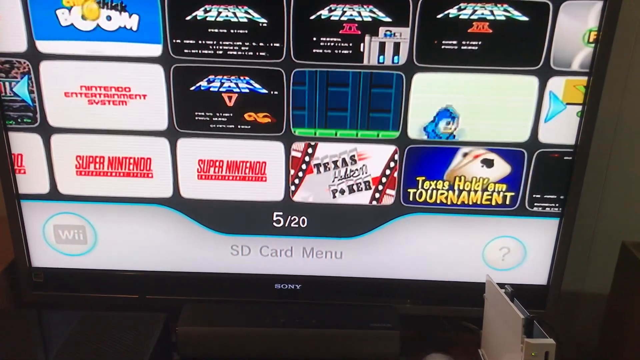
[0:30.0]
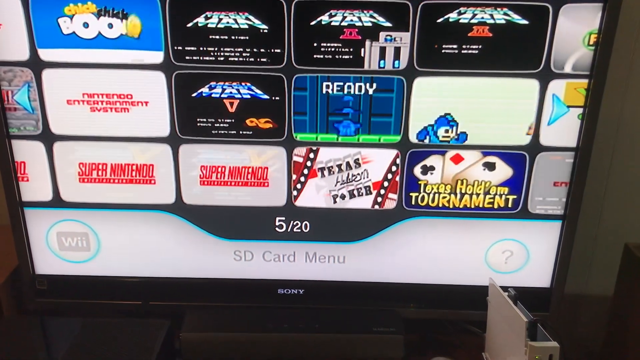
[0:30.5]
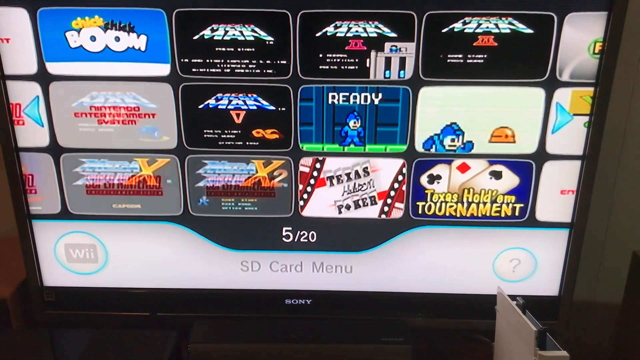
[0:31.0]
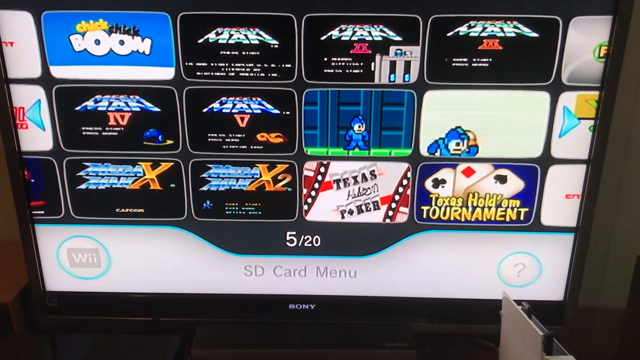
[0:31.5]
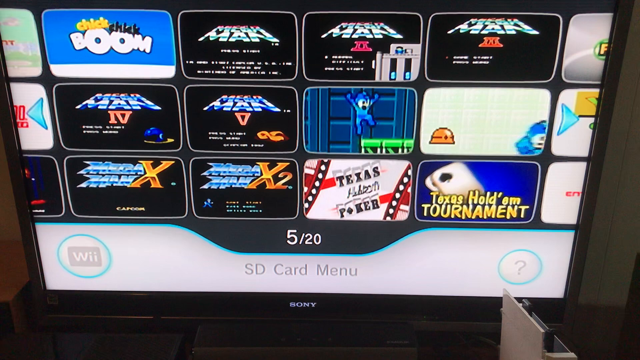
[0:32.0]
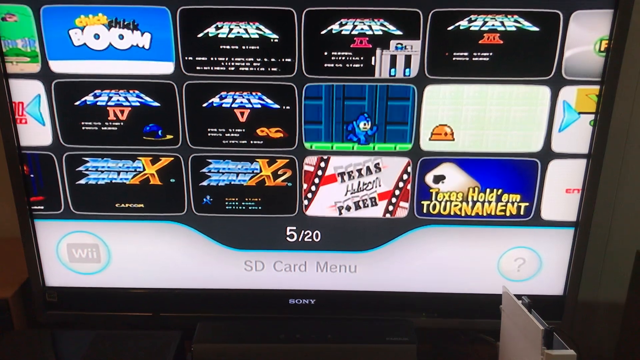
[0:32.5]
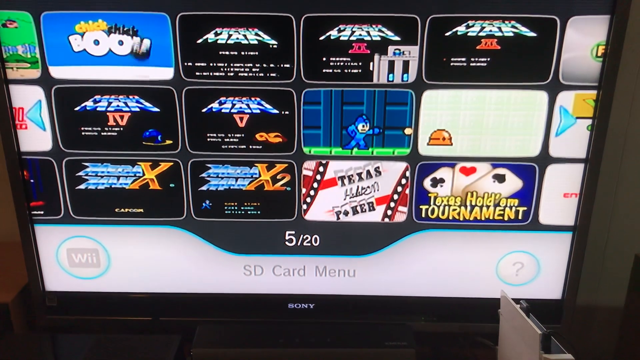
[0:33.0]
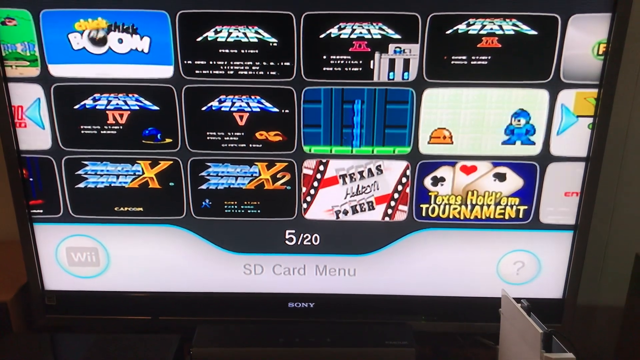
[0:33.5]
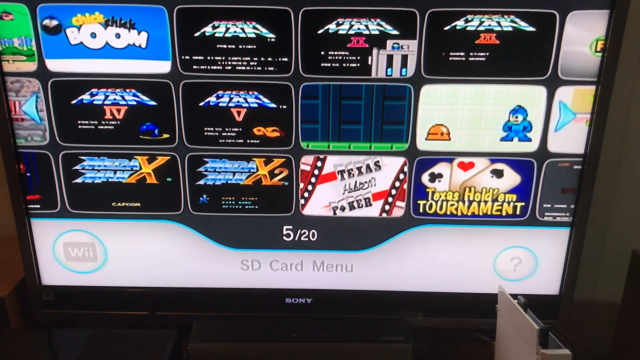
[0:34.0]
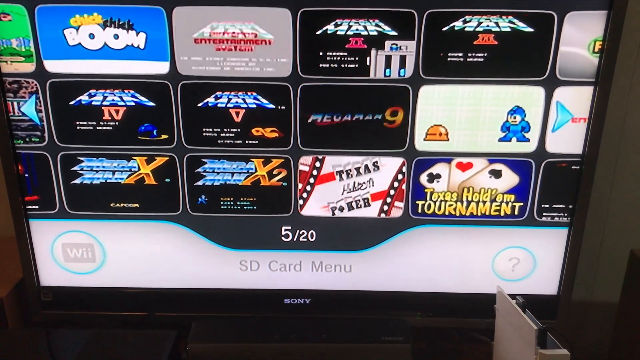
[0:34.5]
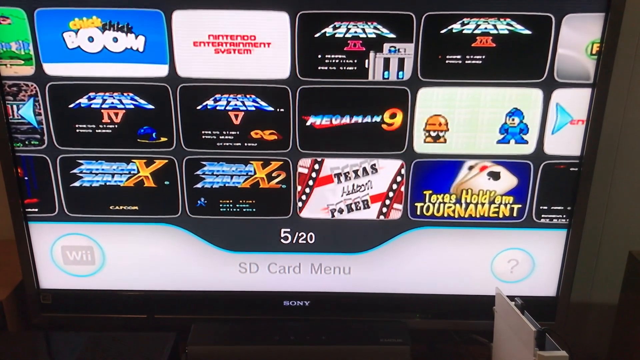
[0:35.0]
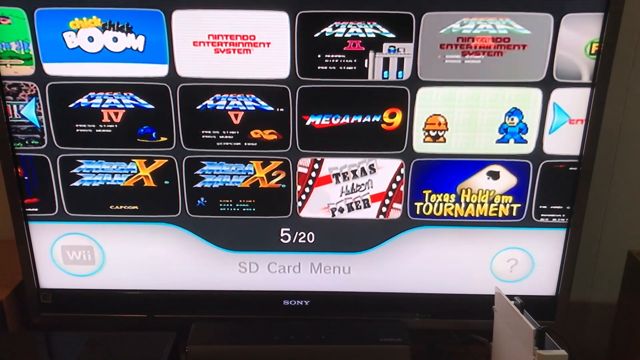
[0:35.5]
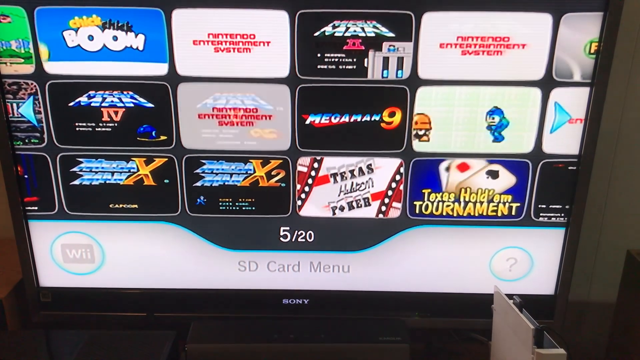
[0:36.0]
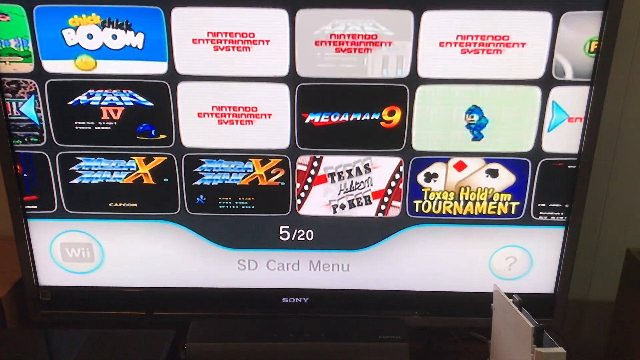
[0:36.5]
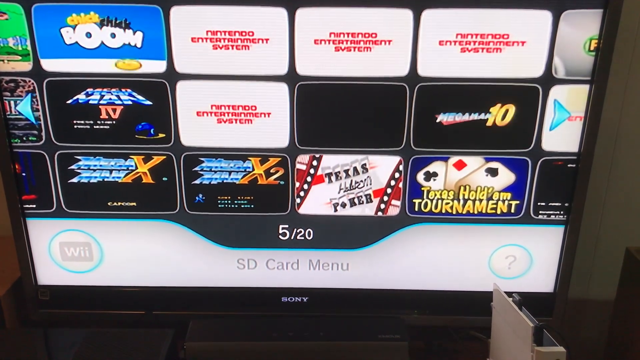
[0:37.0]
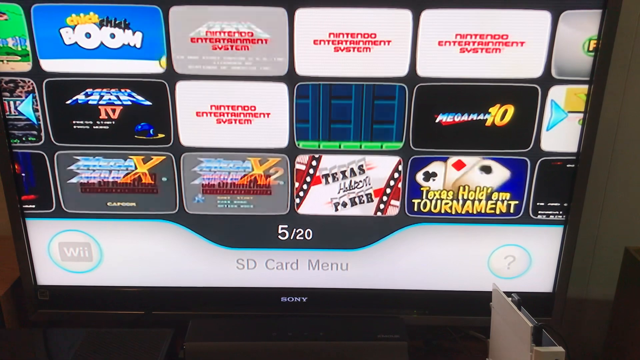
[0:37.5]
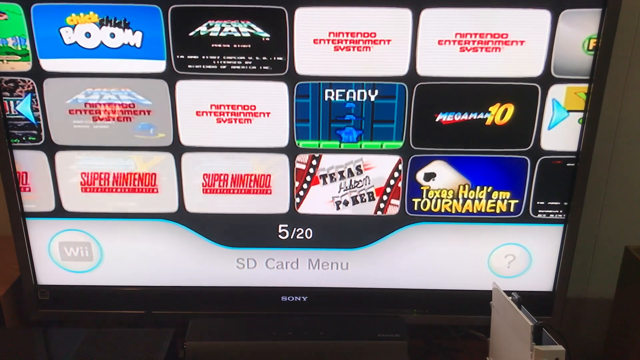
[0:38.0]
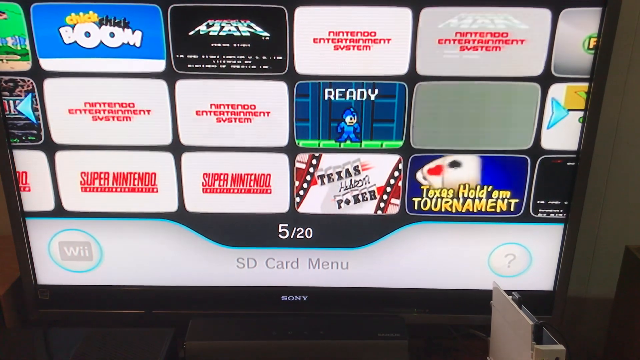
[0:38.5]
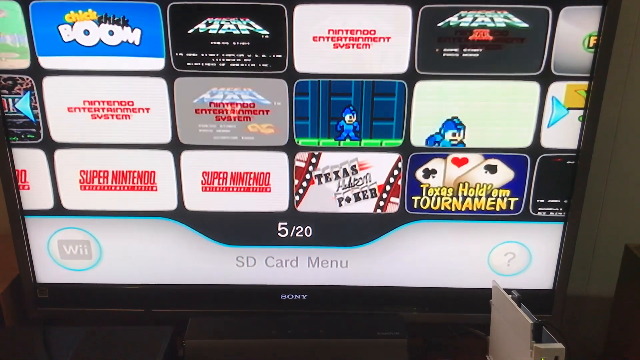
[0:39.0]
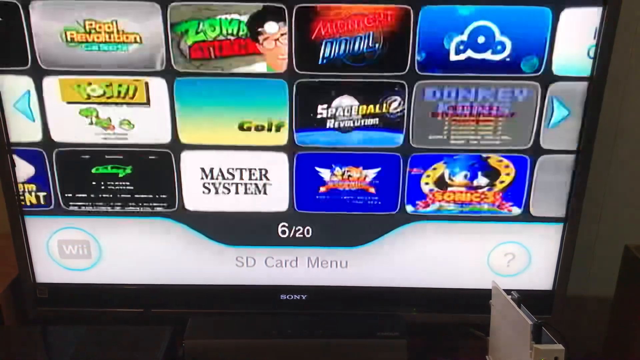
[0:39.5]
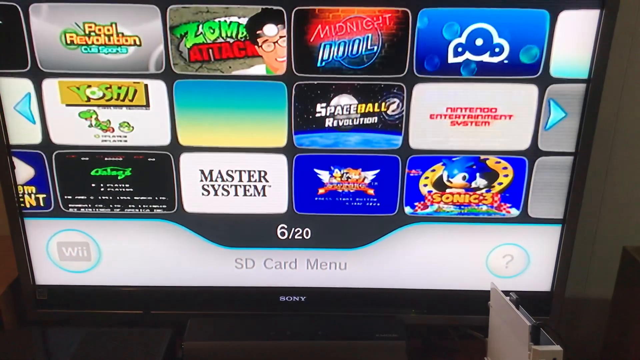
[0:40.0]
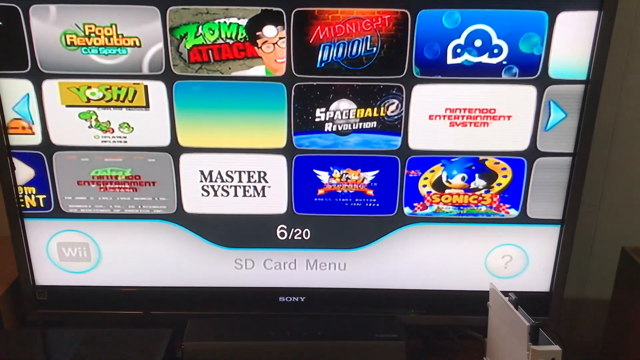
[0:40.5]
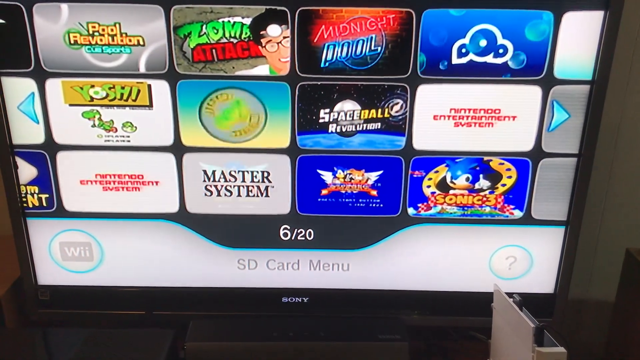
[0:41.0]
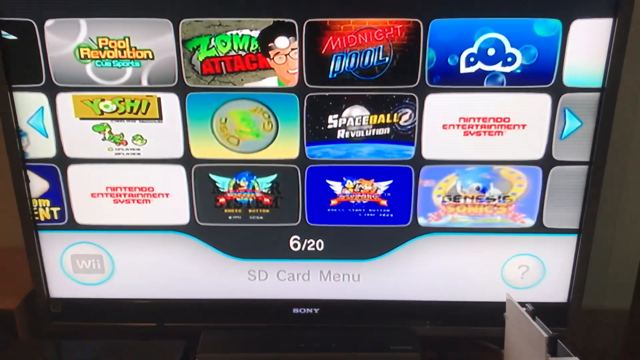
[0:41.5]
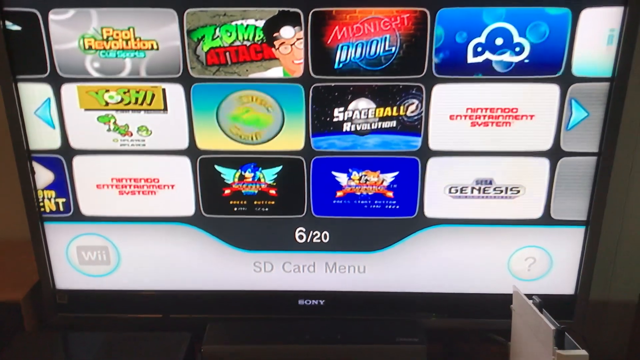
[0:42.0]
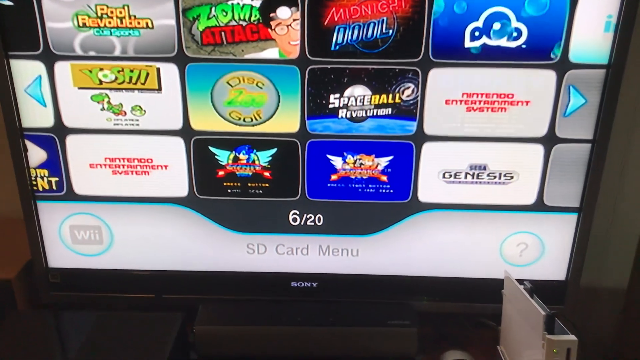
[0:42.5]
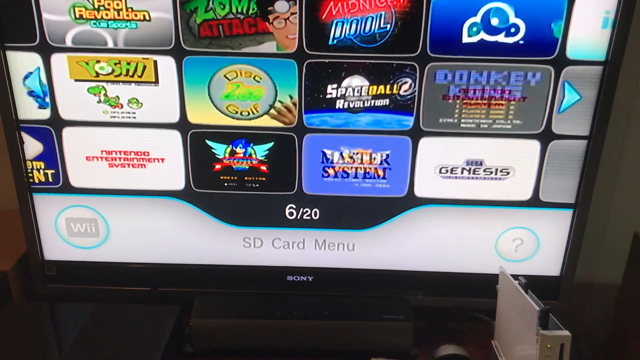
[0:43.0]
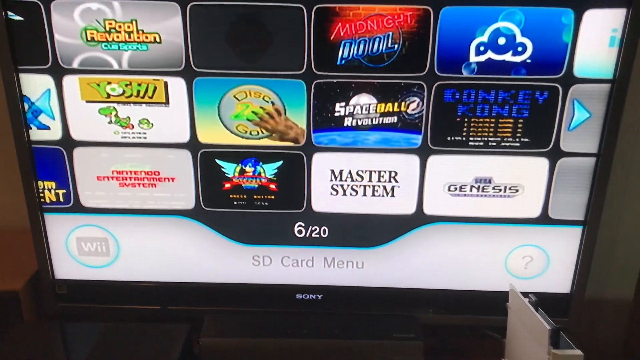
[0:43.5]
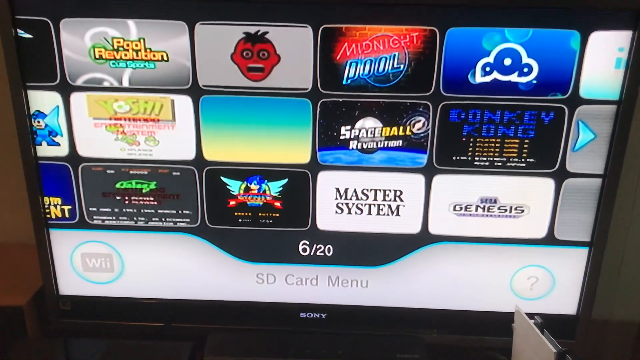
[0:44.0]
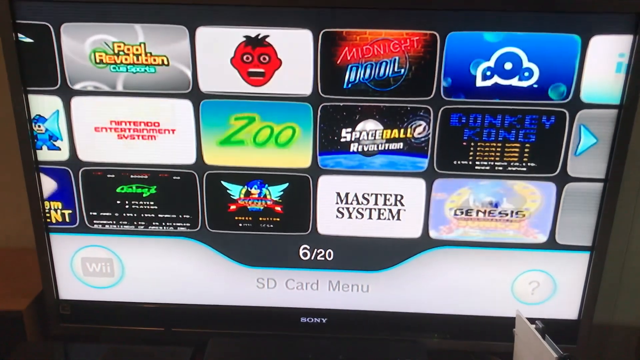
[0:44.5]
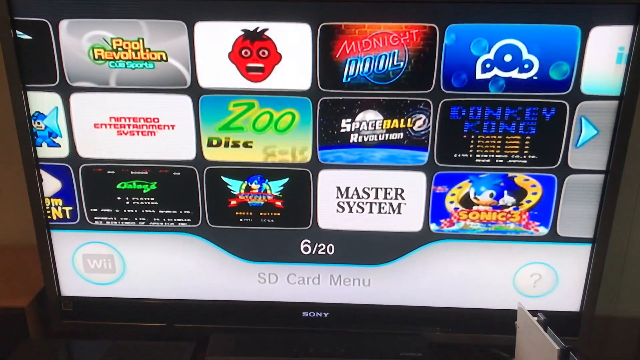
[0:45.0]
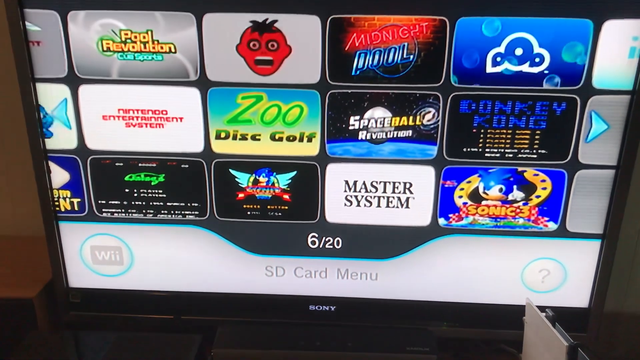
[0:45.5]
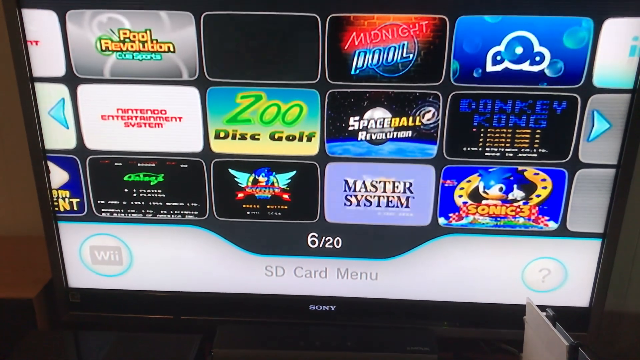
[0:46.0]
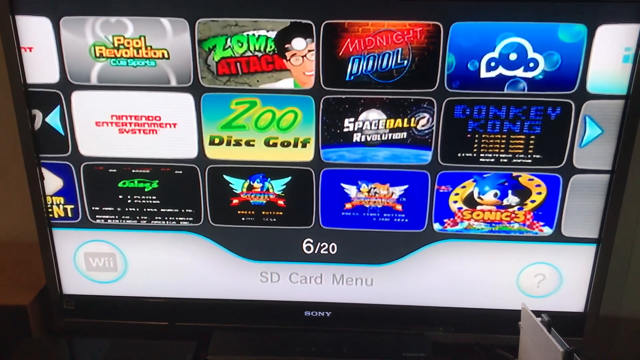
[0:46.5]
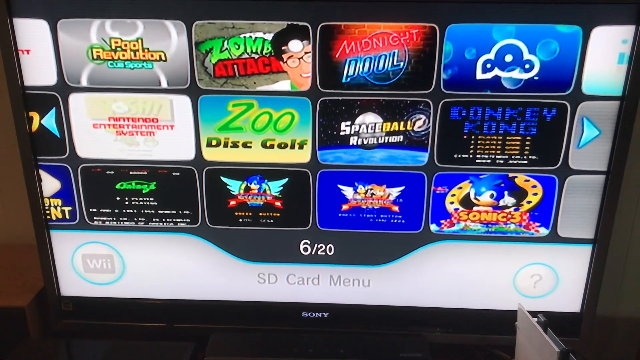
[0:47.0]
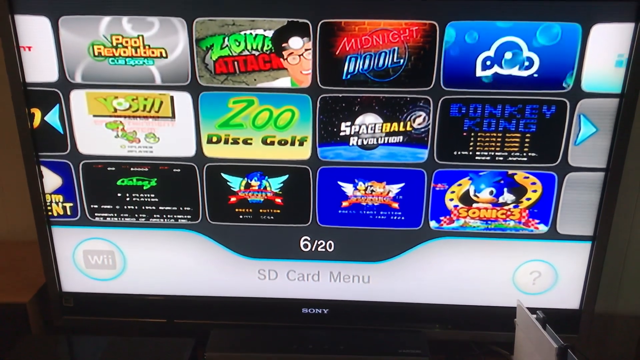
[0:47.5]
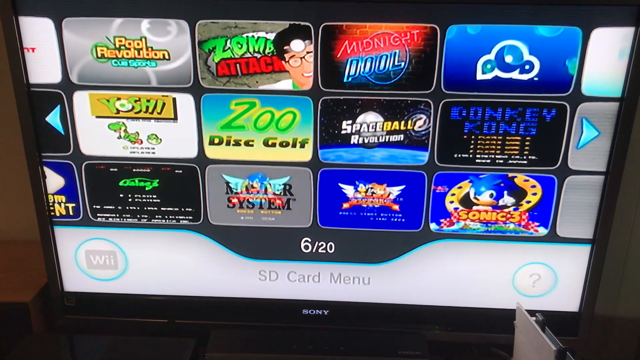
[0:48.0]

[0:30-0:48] Activity continues inside the small boxes as different games pop up. Chick Chick Boom appears, then what looks like some type of Man 1, Man 2 and Man 3, and below that Man 4, Man 5 and Ultra Man; the top one cannot be made out. Two different types of Texas Hold'em Poker are shown. A little blue object looks at a yellow object and appears to be shooting at it, and the yellow object raises its hat at times. On screen 5 there are more Nintendo Entertainment System entries, four of them, and two Super Nintendo systems. Screen 6 shows Pool Revolution, Zombie Catcher, Spaceball, Genesis and Nintendo; the system appears to hold multiple gaming systems on one SD card. A golf game is also shown. There are many different games, some repeated, and Mega Man appears to be one of the most prolific.